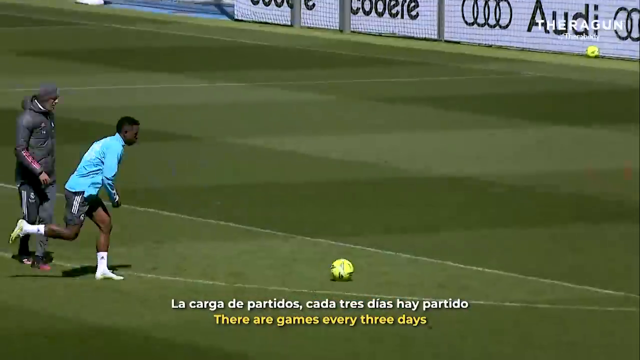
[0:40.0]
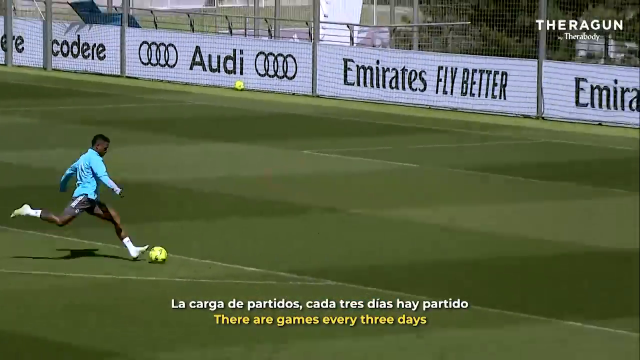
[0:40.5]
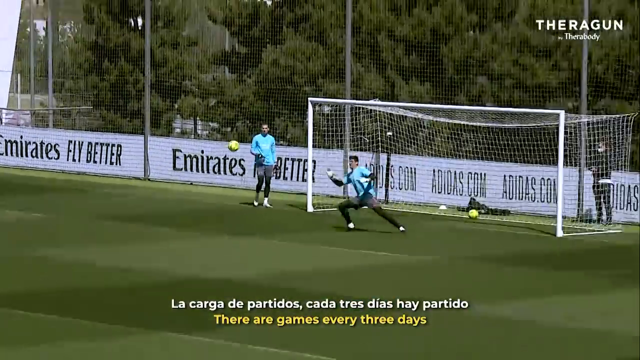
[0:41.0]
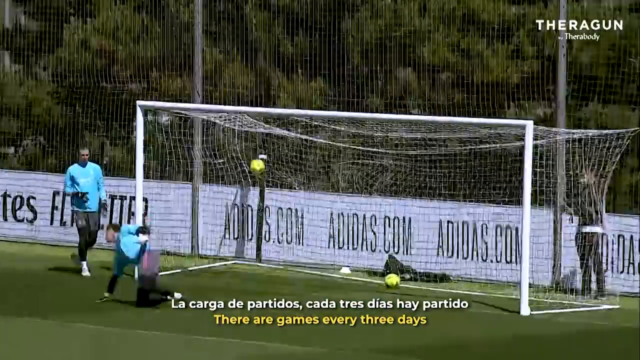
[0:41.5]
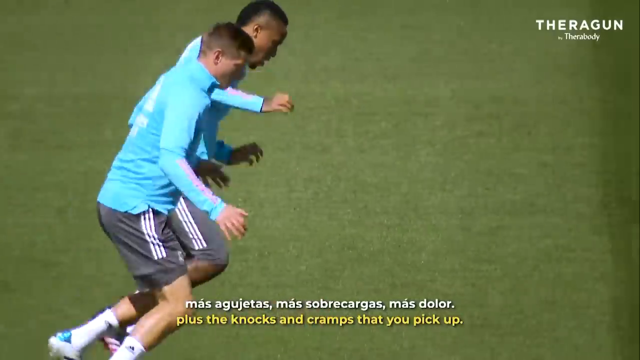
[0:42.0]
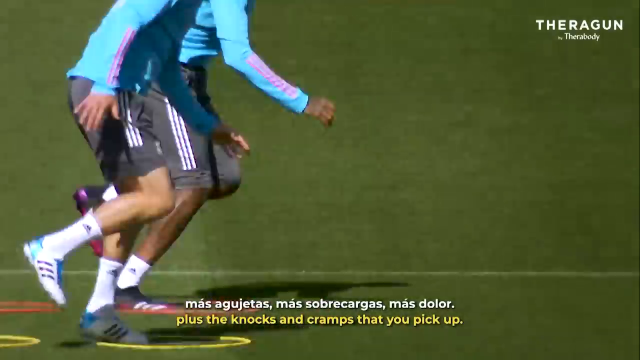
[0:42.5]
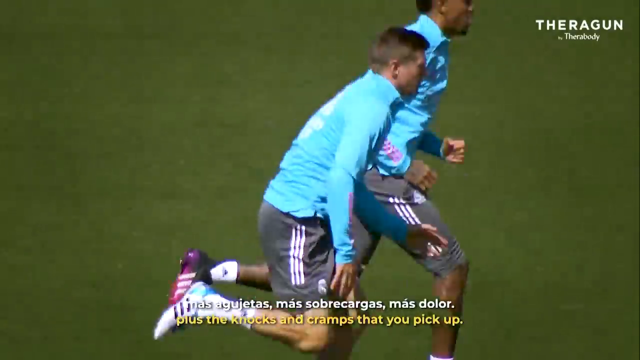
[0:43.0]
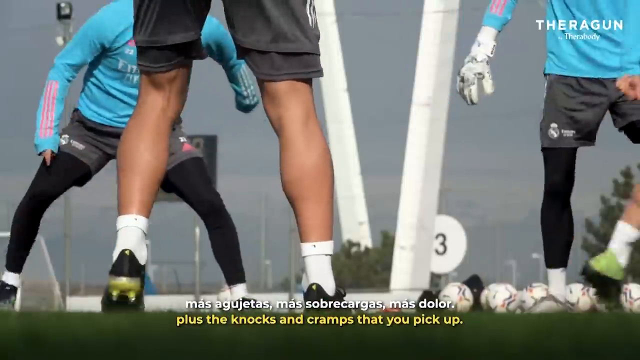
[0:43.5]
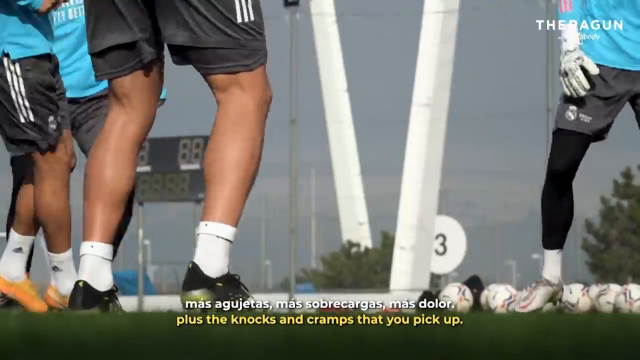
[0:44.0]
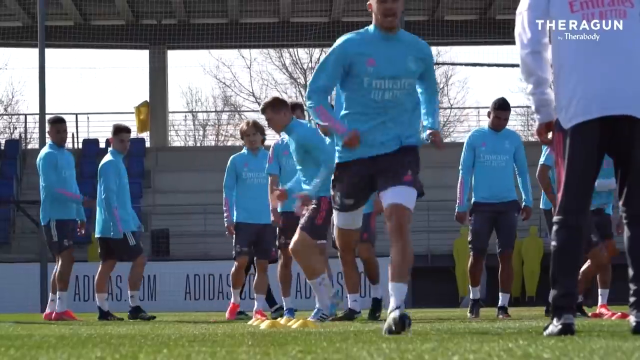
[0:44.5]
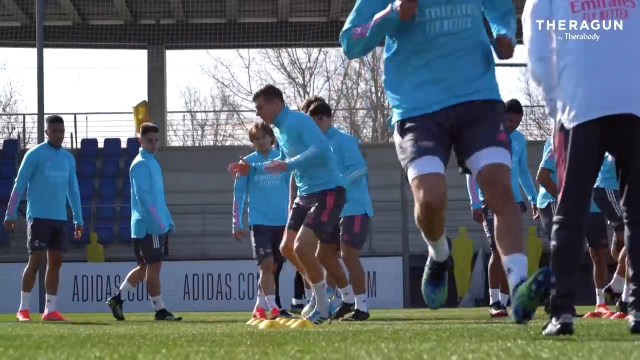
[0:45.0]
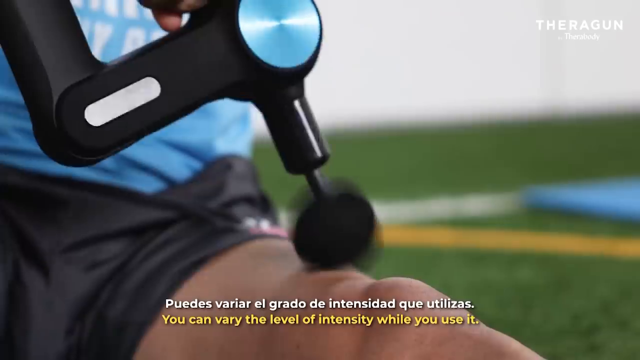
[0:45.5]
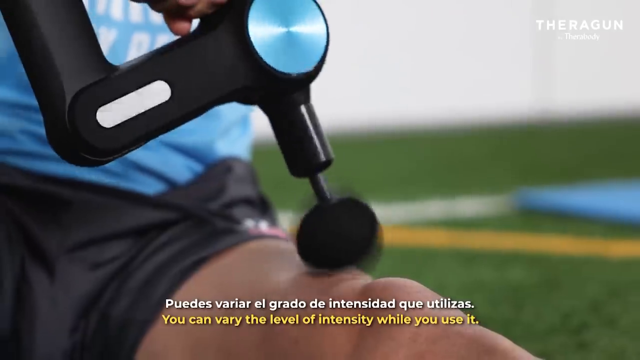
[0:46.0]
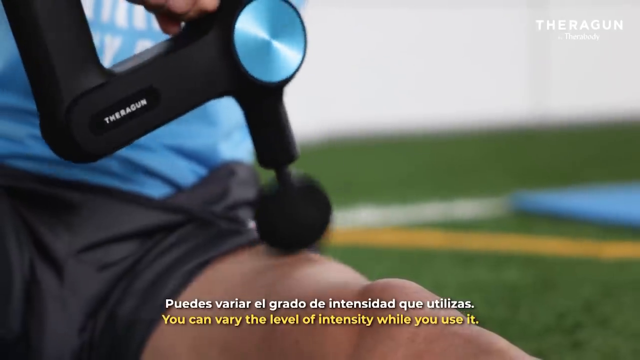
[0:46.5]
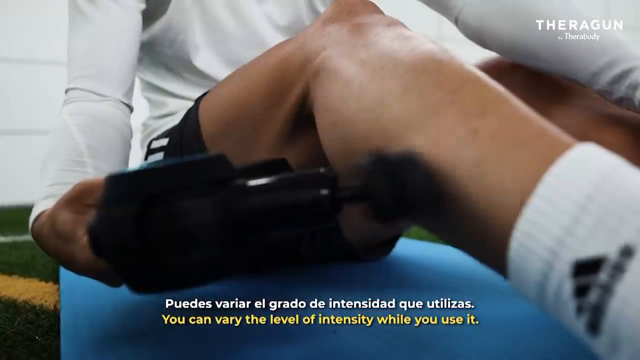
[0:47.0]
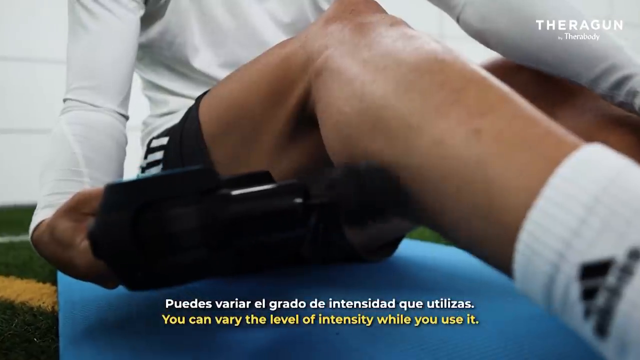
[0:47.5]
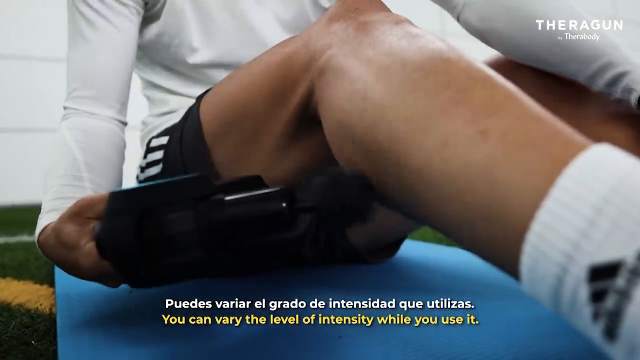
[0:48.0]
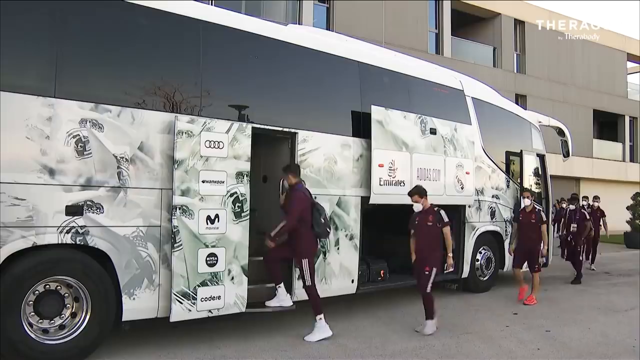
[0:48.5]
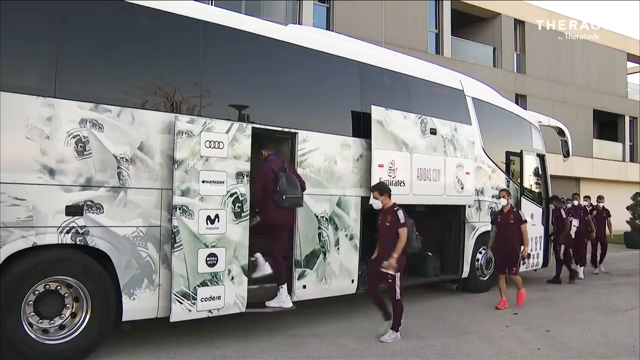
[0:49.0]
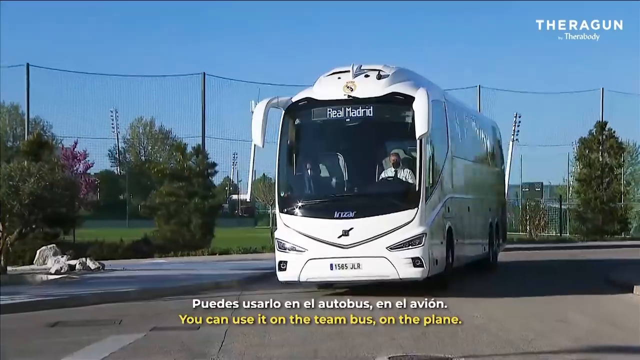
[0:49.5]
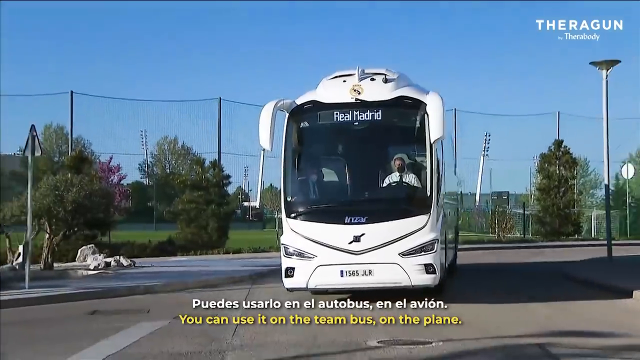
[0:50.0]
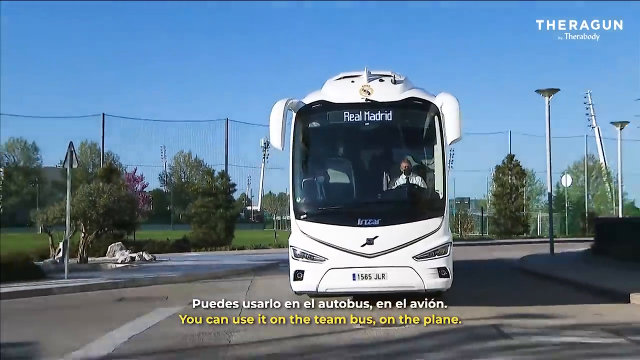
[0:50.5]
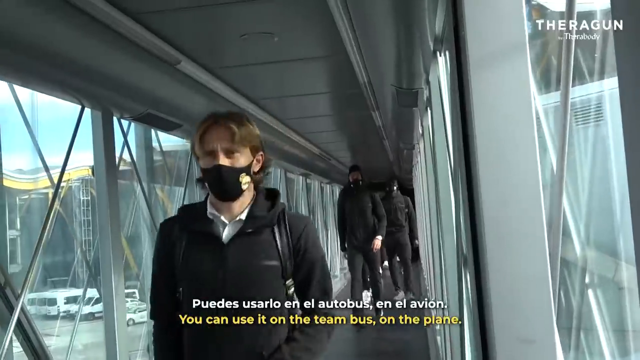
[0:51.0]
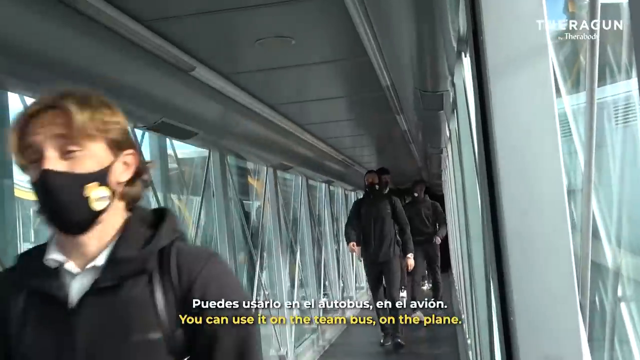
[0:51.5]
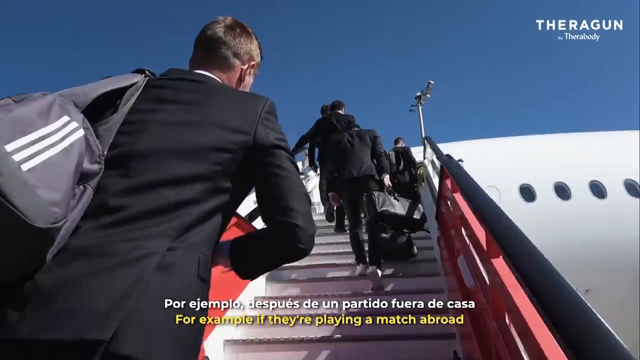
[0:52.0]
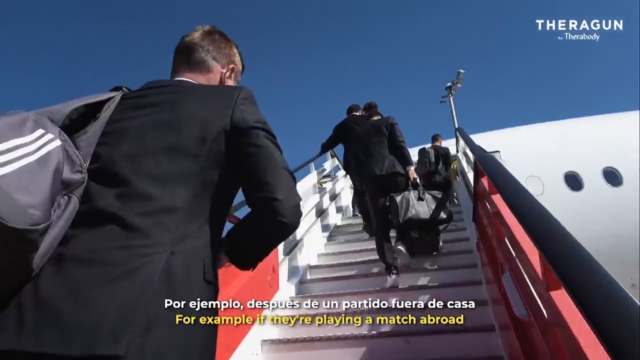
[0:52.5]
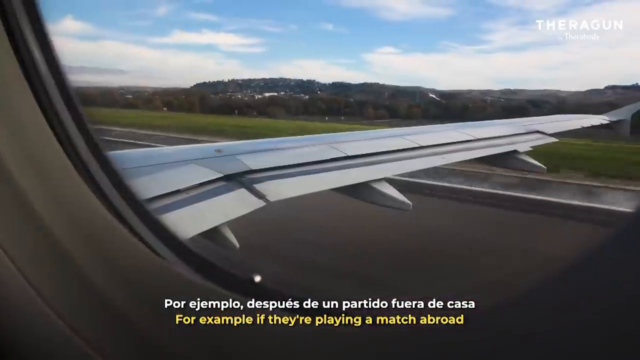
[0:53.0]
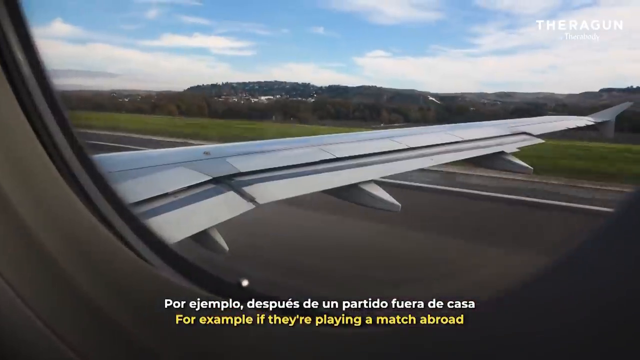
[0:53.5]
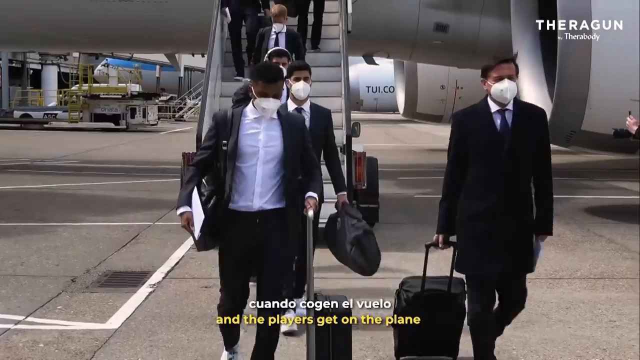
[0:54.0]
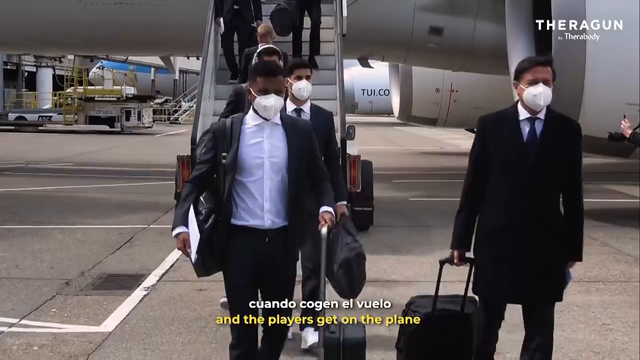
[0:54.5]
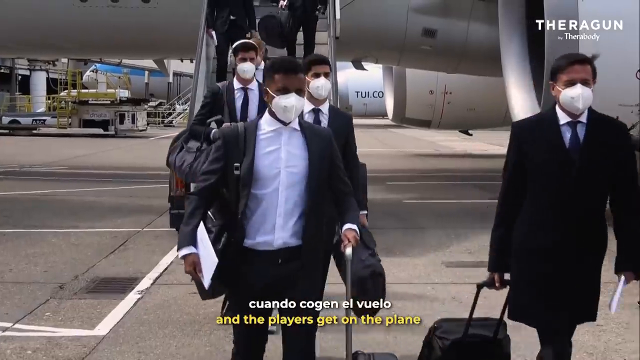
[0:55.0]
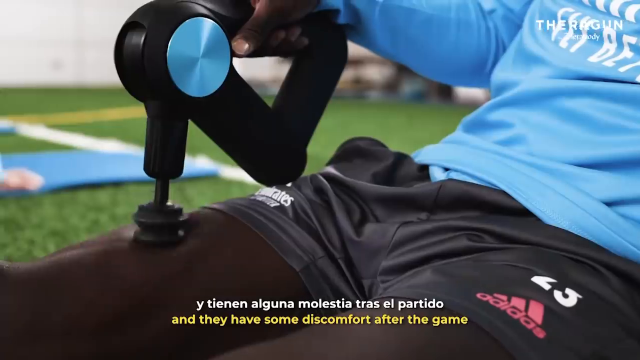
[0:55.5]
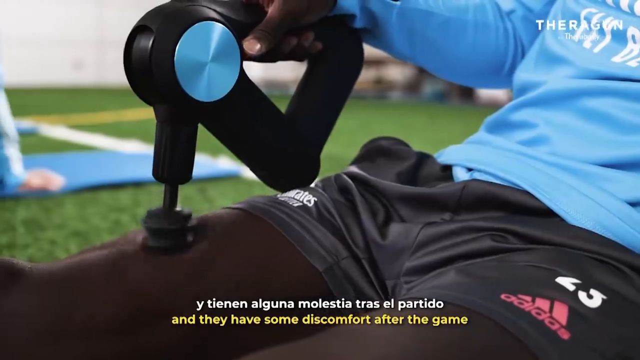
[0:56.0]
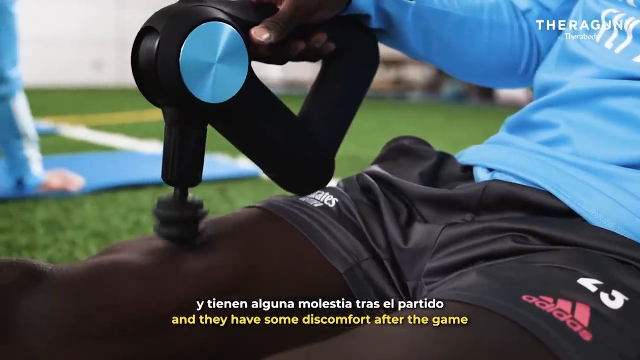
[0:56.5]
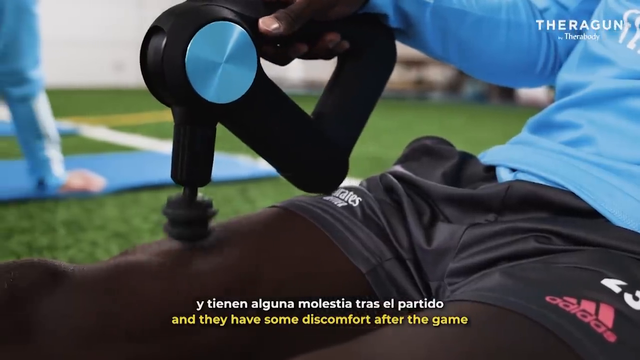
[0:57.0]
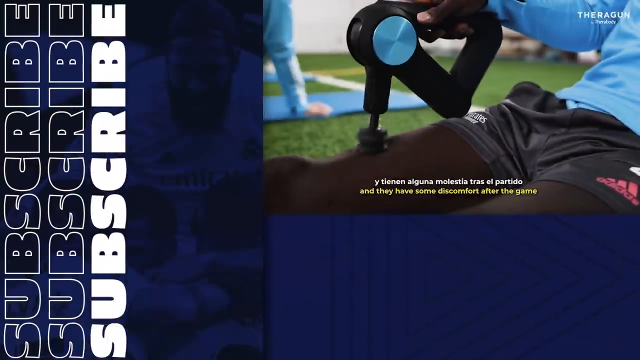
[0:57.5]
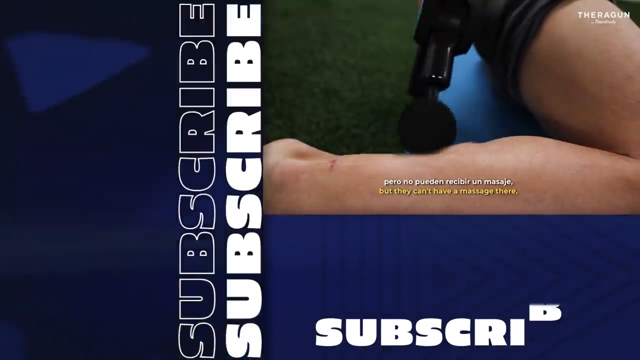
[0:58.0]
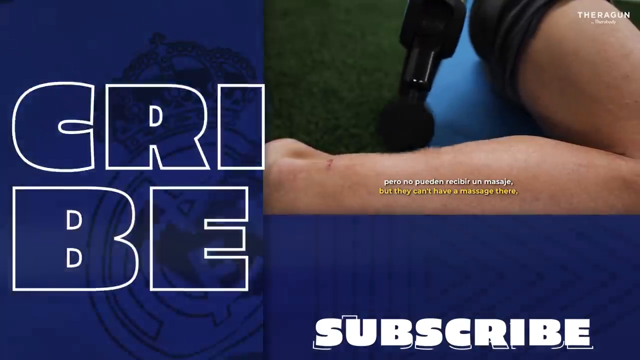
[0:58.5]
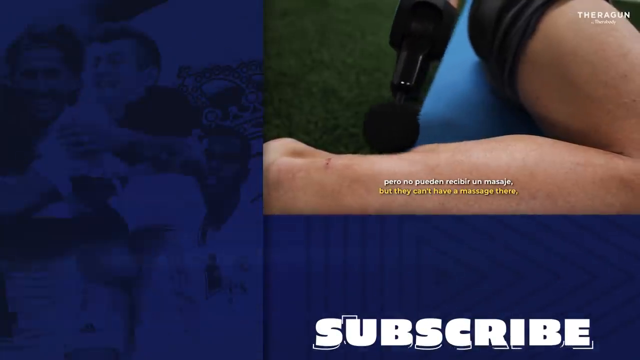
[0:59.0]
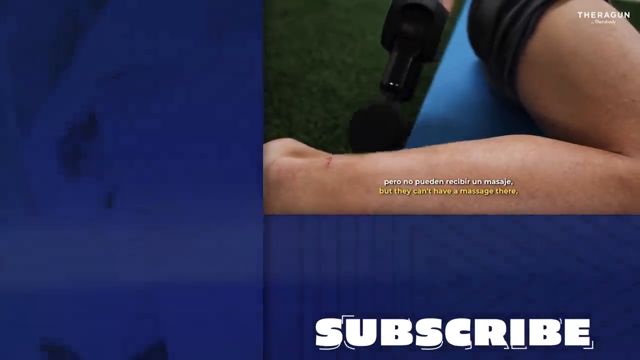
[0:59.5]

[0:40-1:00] A player of African descent in a blue long-sleeved shirt and black pants runs toward a soccer ball placed on the field and kicks it high in the air into a goal net. The goalie dives to the right and misses it. Two players next to each other hop, one on the left leg and one on the right leg, then start running. Players line up, do slides facing sideways, then turn and sprint one after the other. A player massages his left leg with the Theragun held in his right hand. Another player uses his right hand to massage his right calf. A group of players walks onto a bus, and the bus drives away. Players walk through to a plane and up the steps into it, and the plane moves forward at a fast speed on the runway. Players with luggage walk down the steps of the plane, which has probably arrived at their destination. A player with his leg outstretched massages his right leg with the Theragun in his right hand.